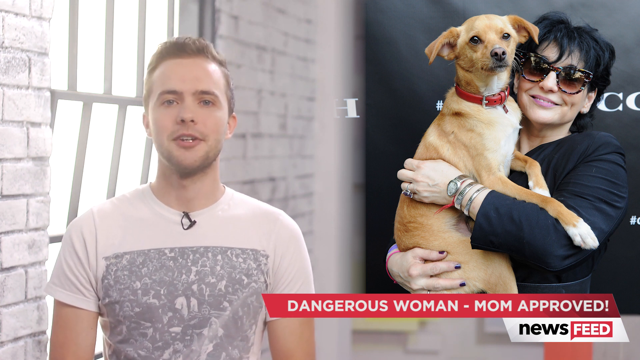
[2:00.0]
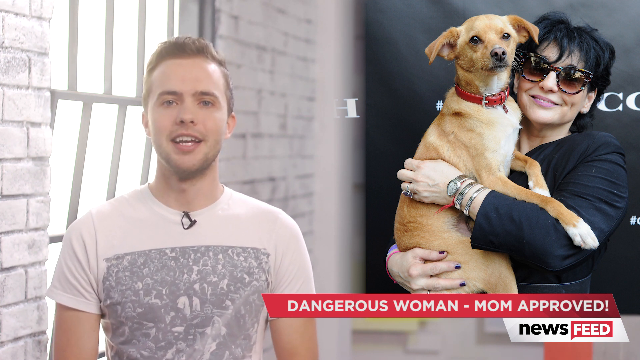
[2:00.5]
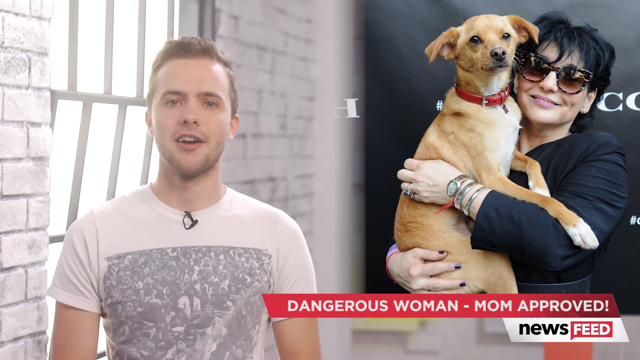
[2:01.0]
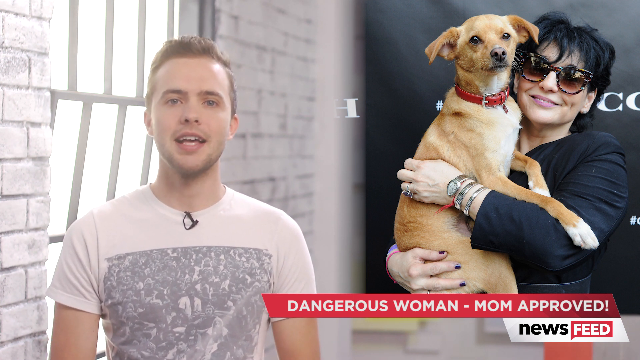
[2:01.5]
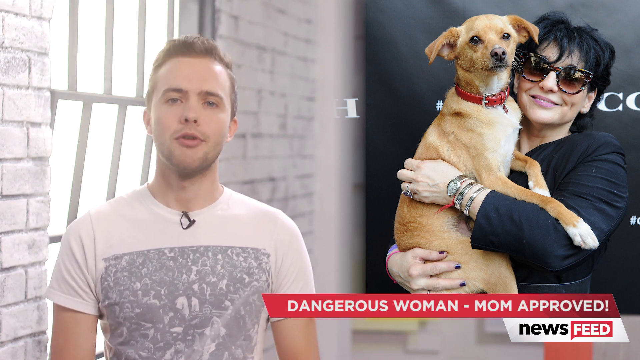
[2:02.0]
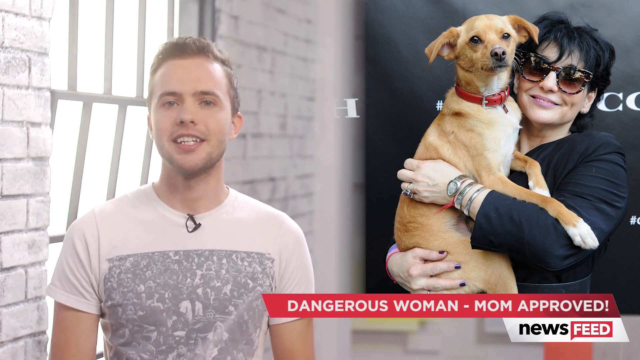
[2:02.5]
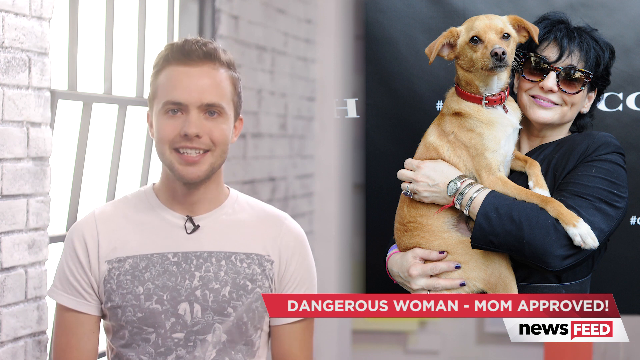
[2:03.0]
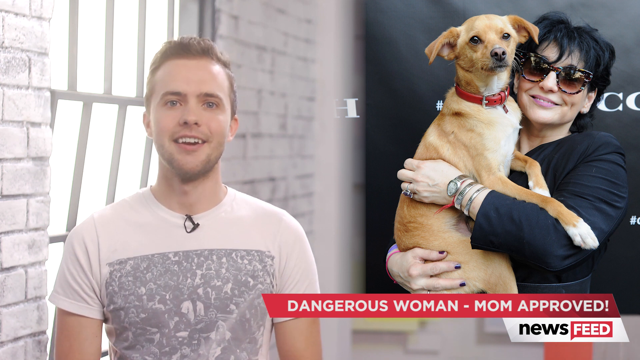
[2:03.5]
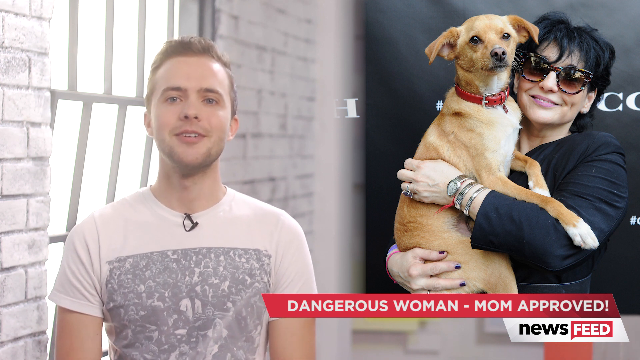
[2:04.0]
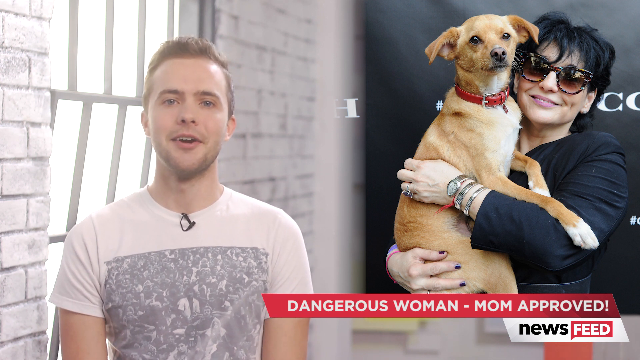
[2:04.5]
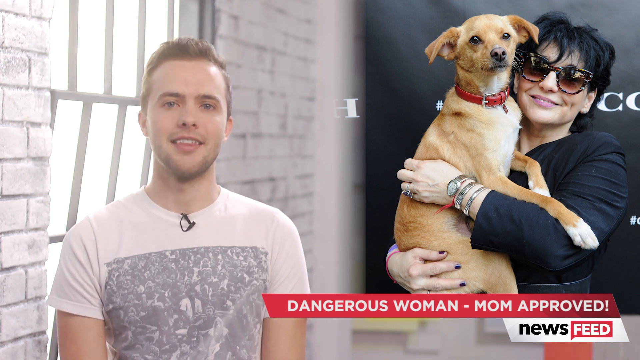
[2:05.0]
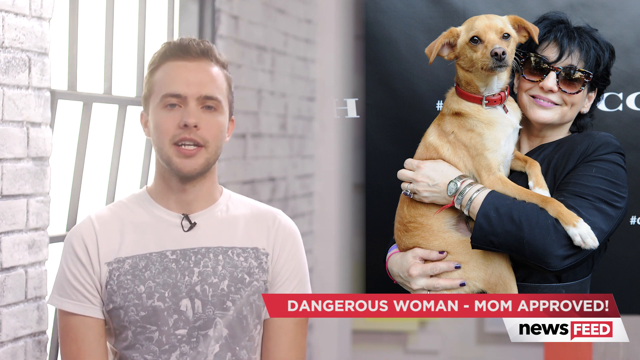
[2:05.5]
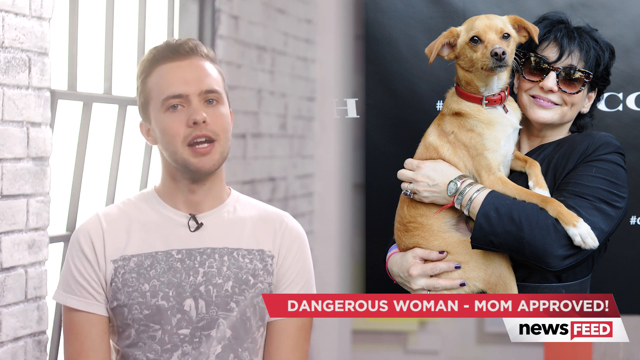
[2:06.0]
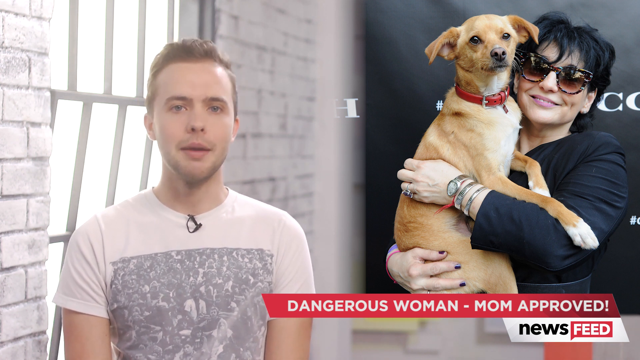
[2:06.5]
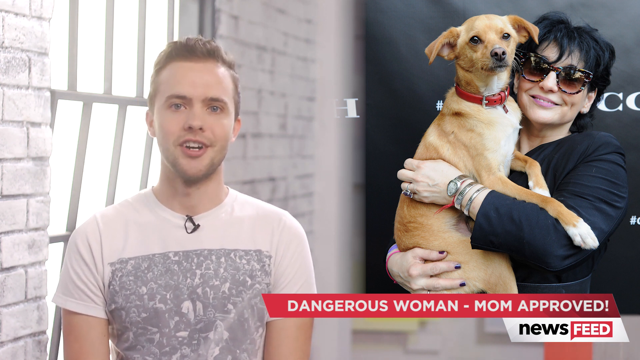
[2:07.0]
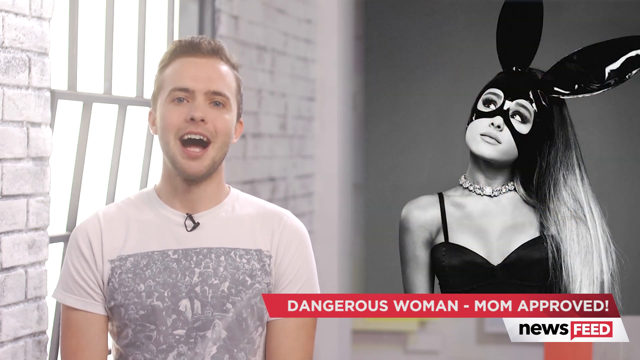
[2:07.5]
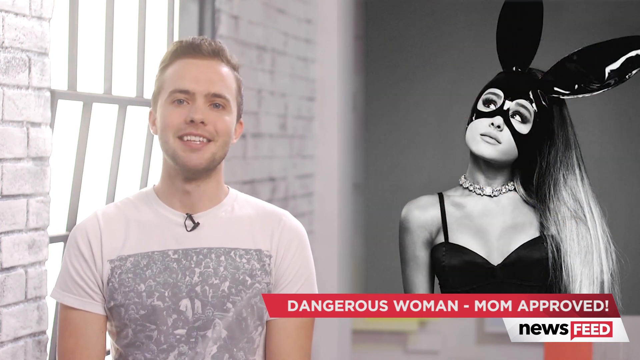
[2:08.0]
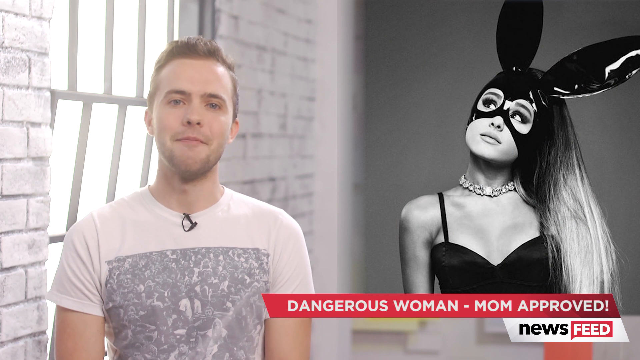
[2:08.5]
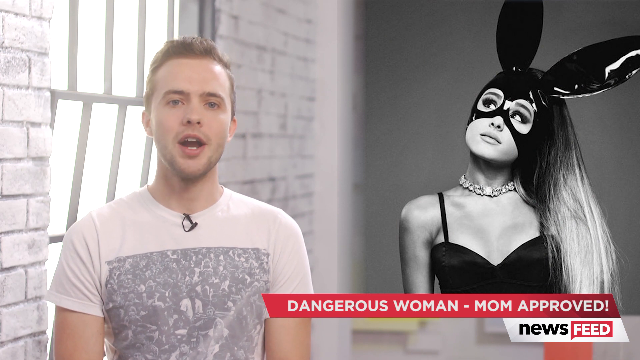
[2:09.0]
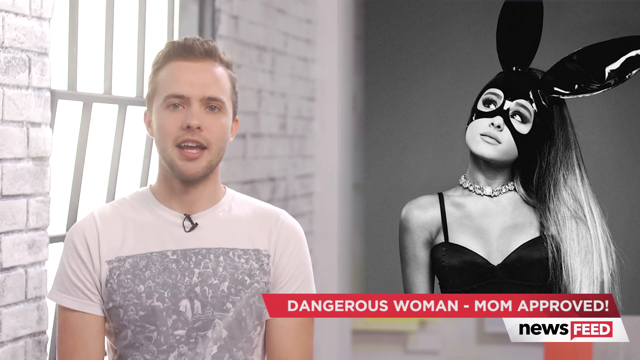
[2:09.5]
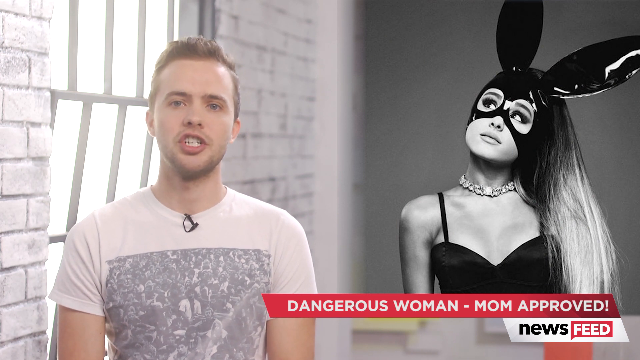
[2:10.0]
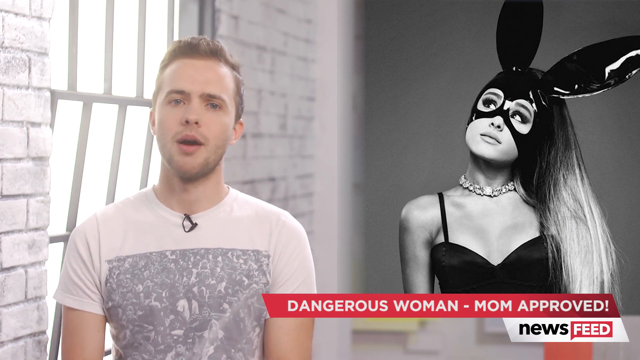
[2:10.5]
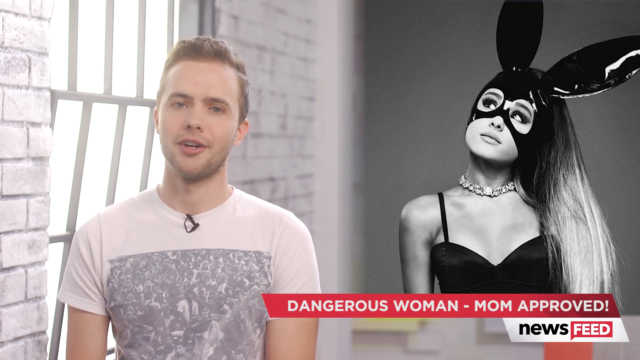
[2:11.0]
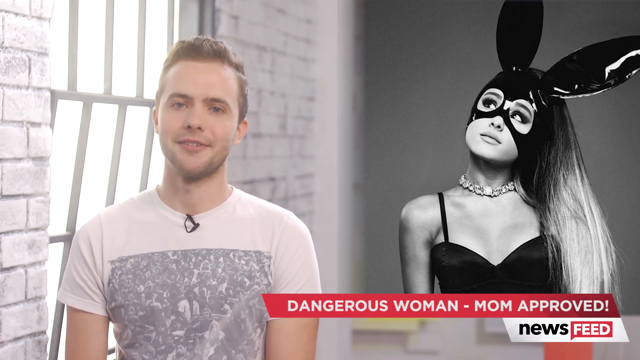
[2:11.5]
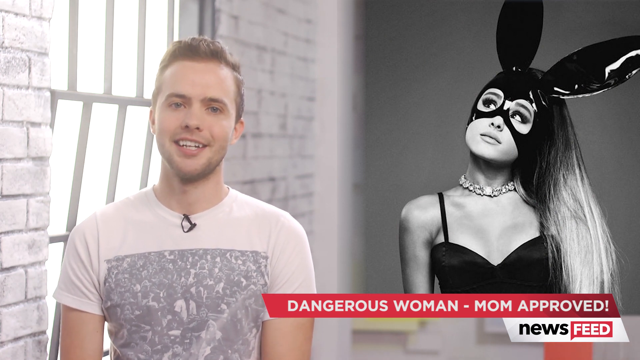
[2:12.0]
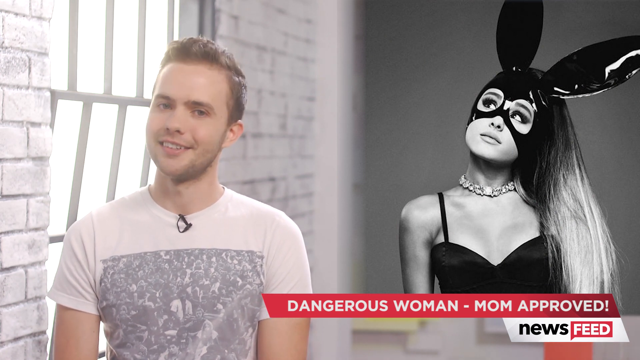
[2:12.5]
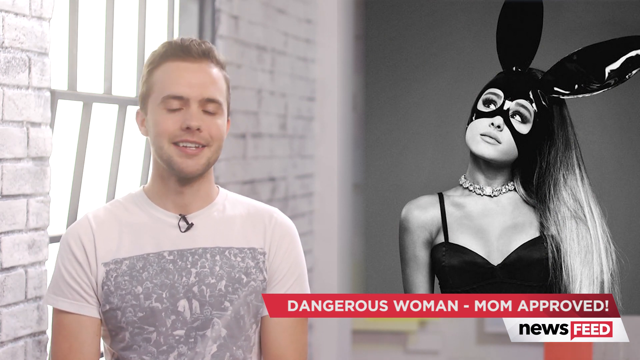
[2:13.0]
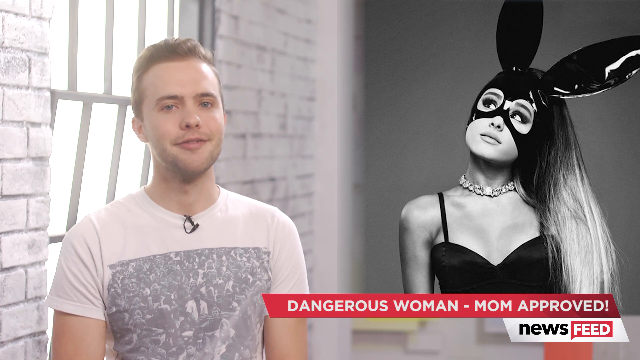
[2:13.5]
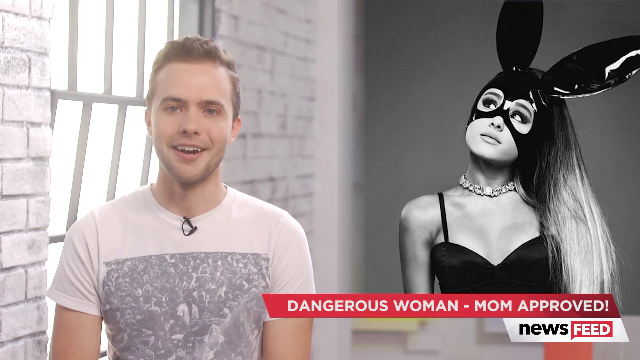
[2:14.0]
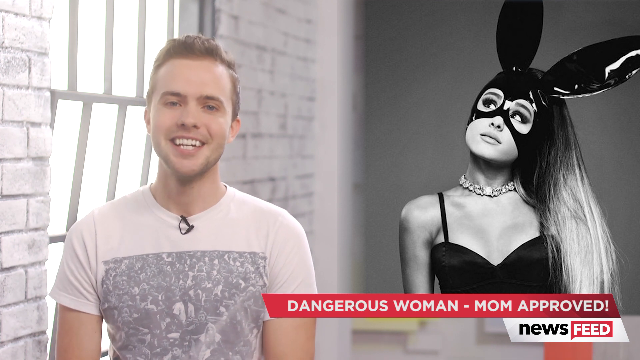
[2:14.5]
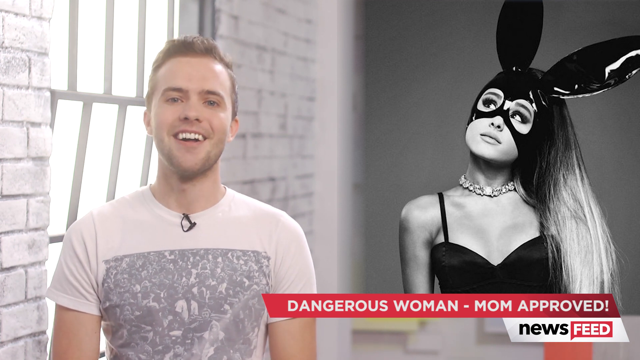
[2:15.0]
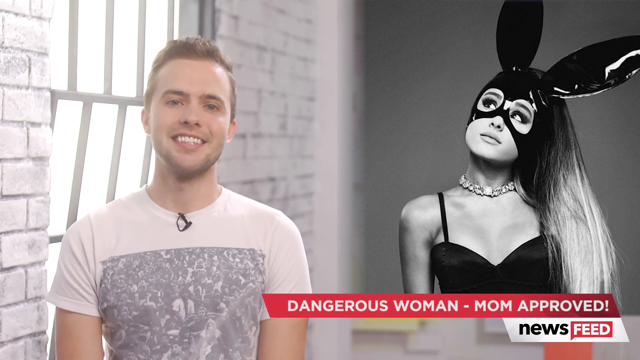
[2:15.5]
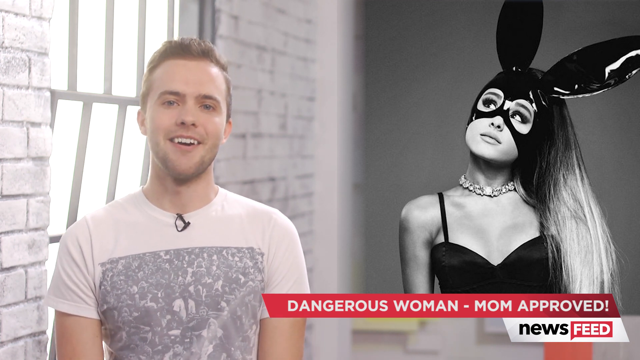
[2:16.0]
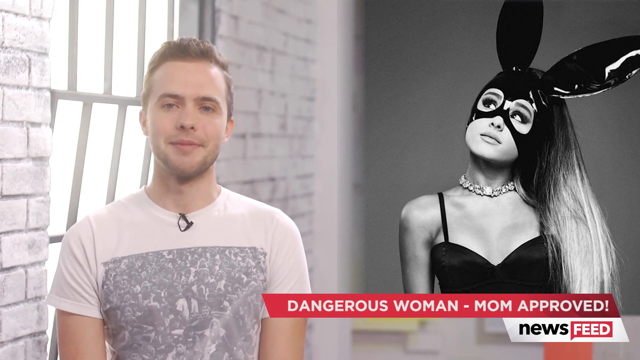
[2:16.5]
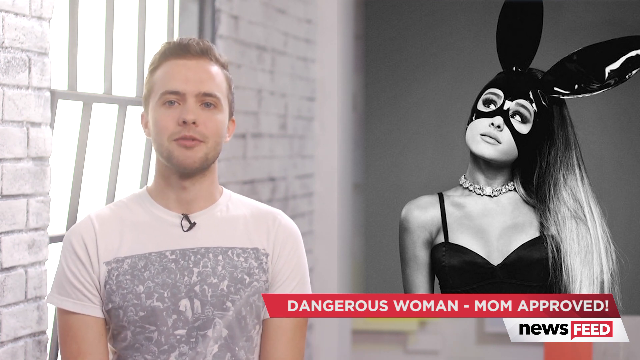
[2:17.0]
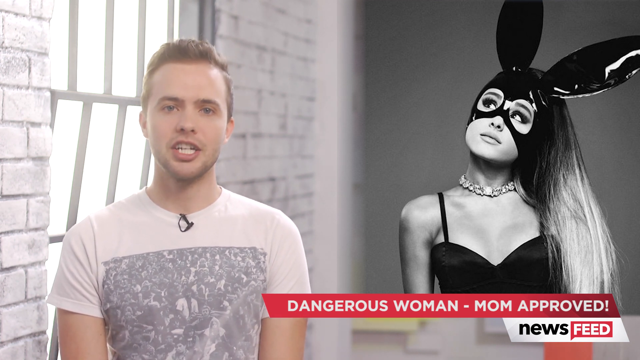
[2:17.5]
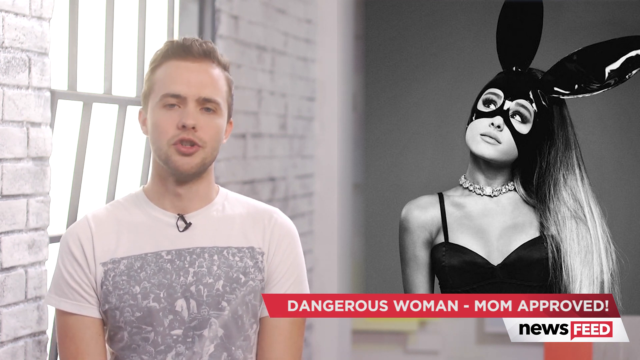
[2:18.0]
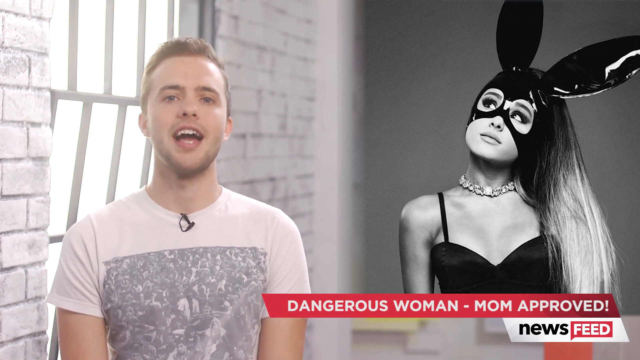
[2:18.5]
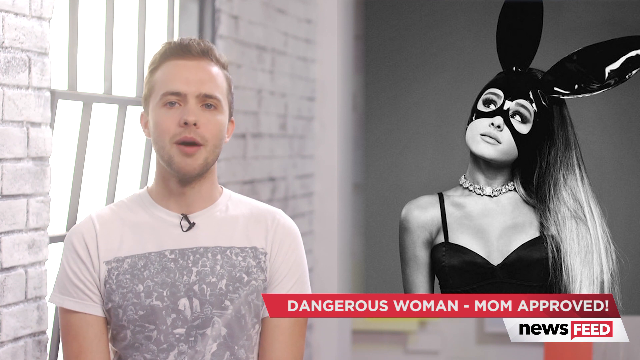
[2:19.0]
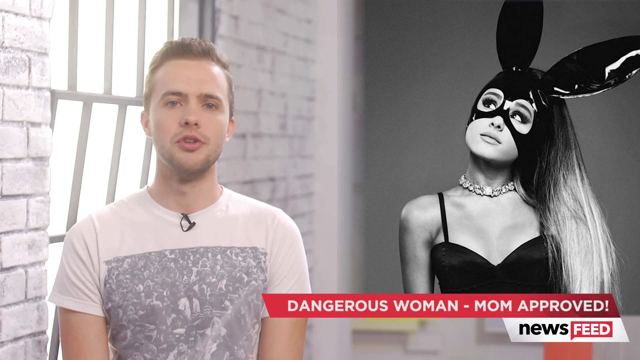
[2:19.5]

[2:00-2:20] In an entertainment-style show, a young man reports a news story on Ariana Grande and her mother. He stands on the left side of a room, with a multi-paned window and a white brick wall behind him, giving it an urban look. In the lower right corner, a banner reads "dangerous woman, mom approved" in white text on a red background. On the screen to the right is Ariana Grande's mother, dark-haired, wearing a dark pair of black-rimmed sunglasses, smiling and holding a dog, with her left hand around the dog's body; she wears three bracelets. The young man smiles, wearing a white t-shirt with a black-and-white graphic image on it. The screen then changes to Ariana's face: she wears a black leather mask with black ears much like a mouse's, her hair is long and straight, and she wears a choker around her neck.